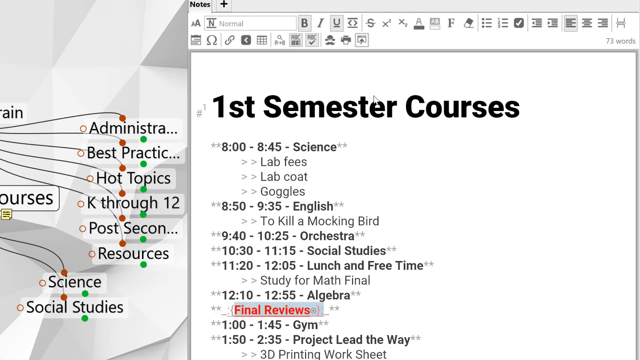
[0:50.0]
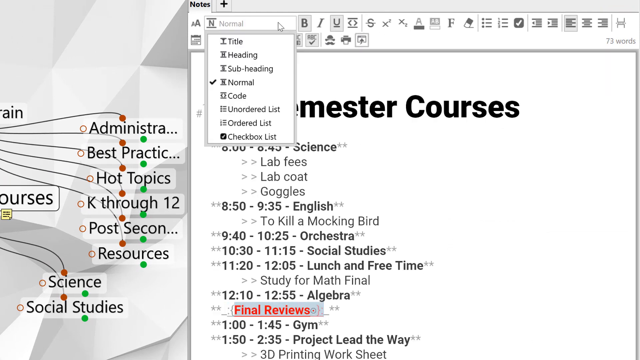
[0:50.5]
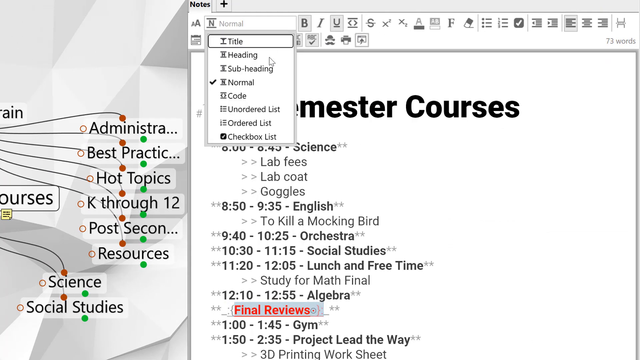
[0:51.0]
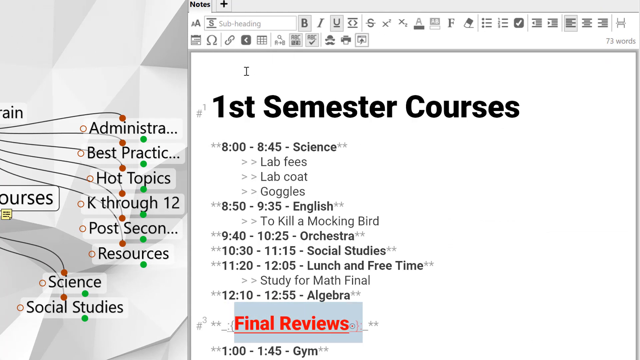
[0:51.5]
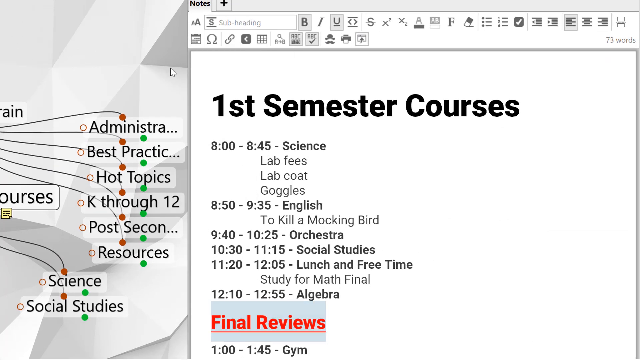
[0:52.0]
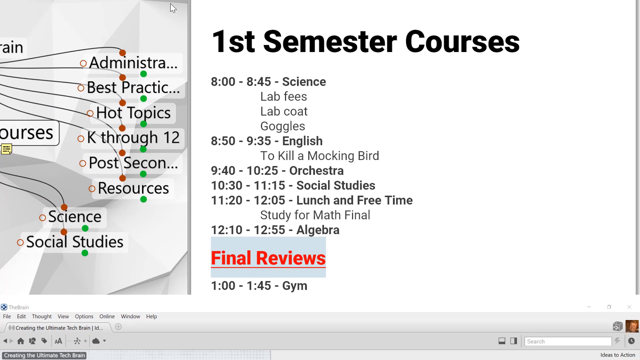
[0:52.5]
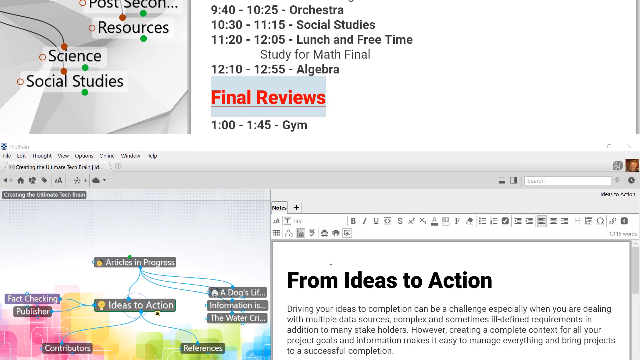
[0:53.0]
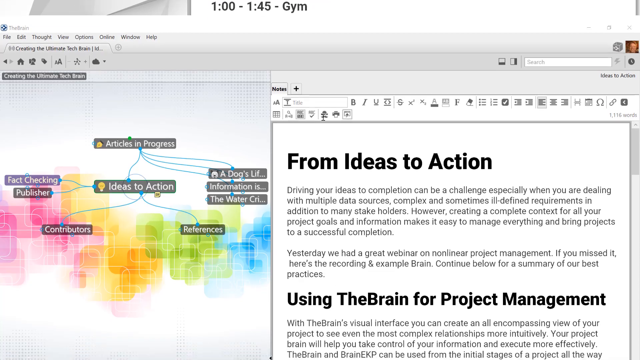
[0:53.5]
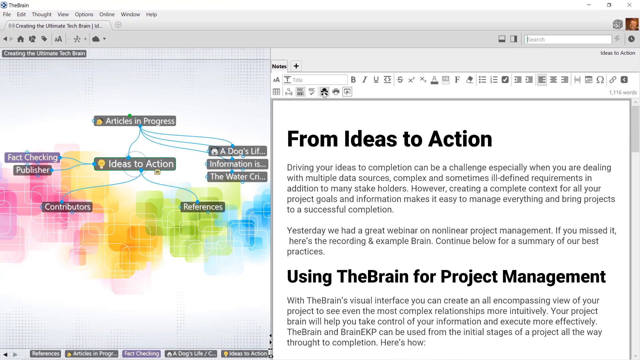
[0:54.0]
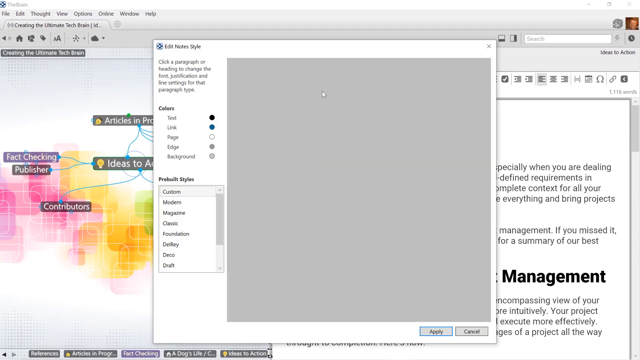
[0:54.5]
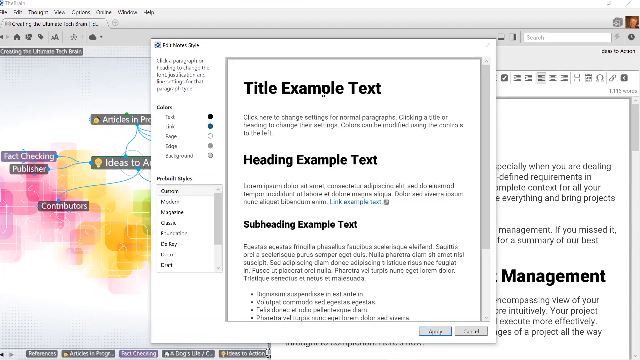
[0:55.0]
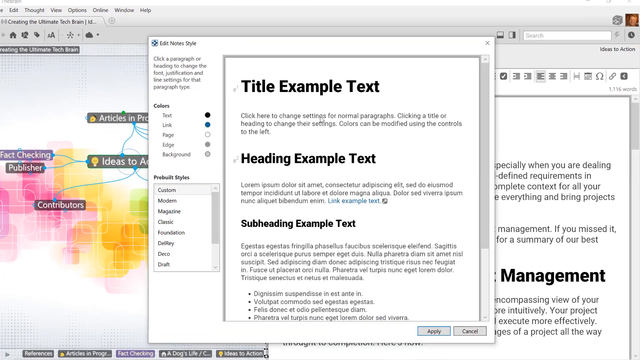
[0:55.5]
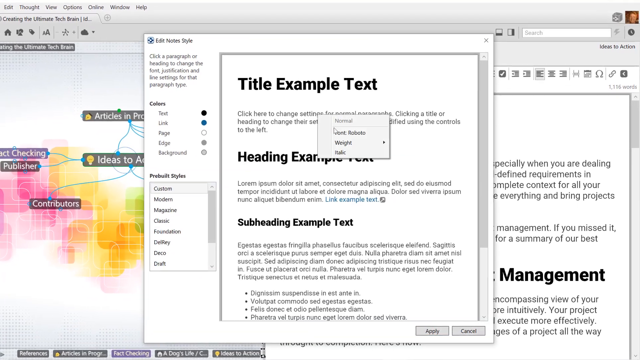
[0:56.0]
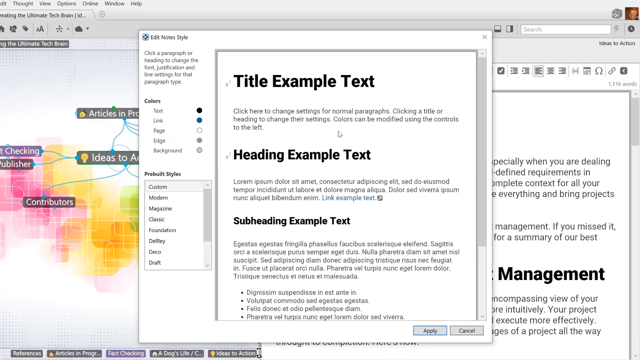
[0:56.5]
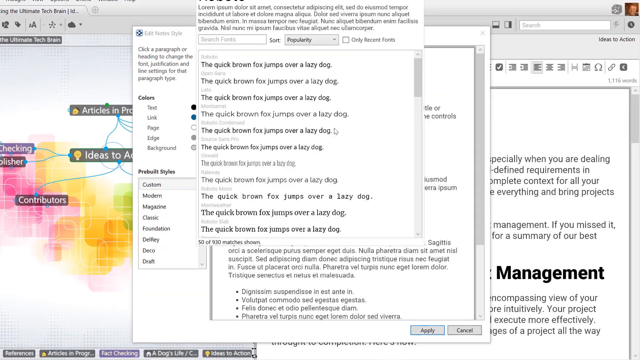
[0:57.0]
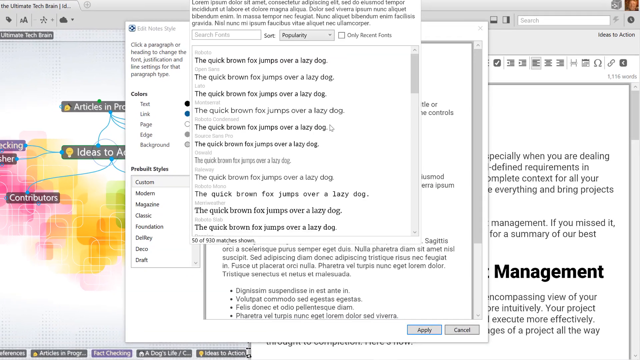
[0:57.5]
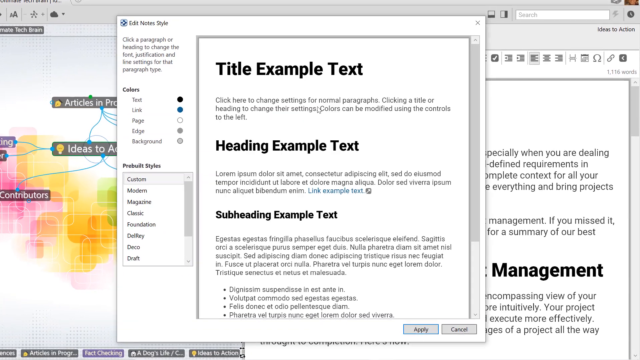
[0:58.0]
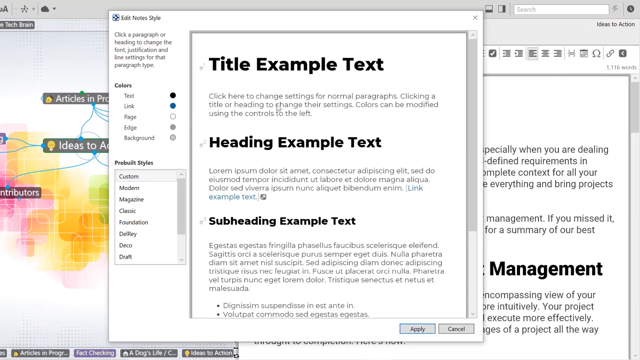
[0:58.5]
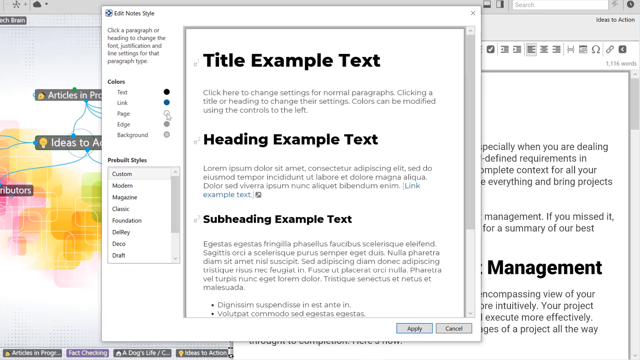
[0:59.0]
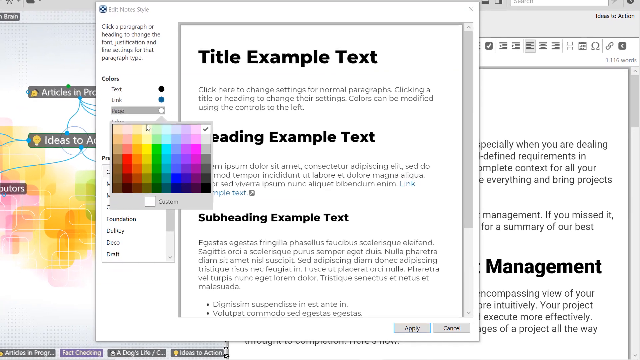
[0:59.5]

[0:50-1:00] The notes show semester courses, apparently those of a college student, laid out as an itinerary. The first entry reads "8 o'clock to 8.45, science", with various items included in the science class underneath, followed by English, orchestra and others. The user clicks at the top of what looks like a Word document, where "normal" currently has a checkmark, and clicks on "subheading"; towards the bottom, under the 12:10 time for algebra, "final reviews" appears in red text. The view then scrolls to a different area with bursts of greens, yellows, pinks and blues and different names written on top, such as "articles in progress" and "ideas to action". There are probably six or seven boxes, with blue lines coming from the top of "articles" and branching out to other subsets. A pop-up box appears; the user right-clicks, chooses a font option to change the font style, picks yellow, and then clicks off.